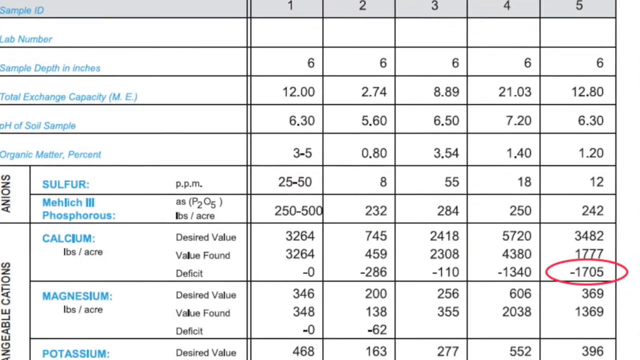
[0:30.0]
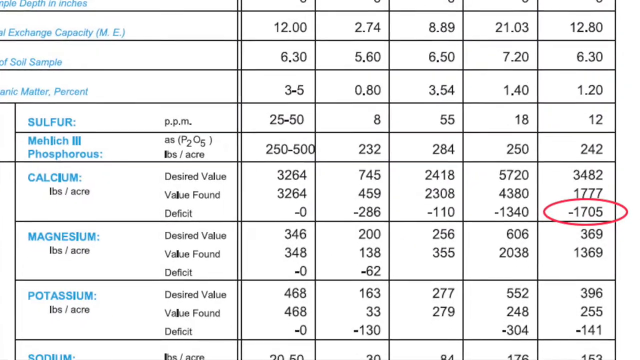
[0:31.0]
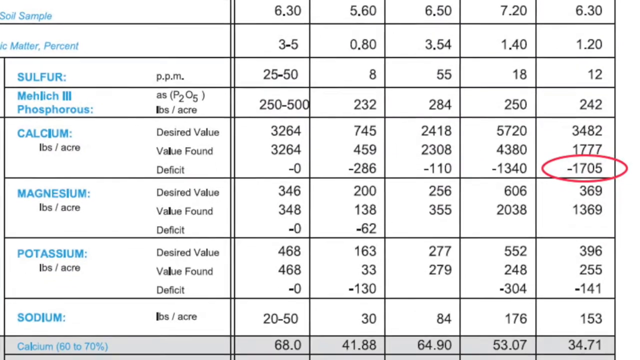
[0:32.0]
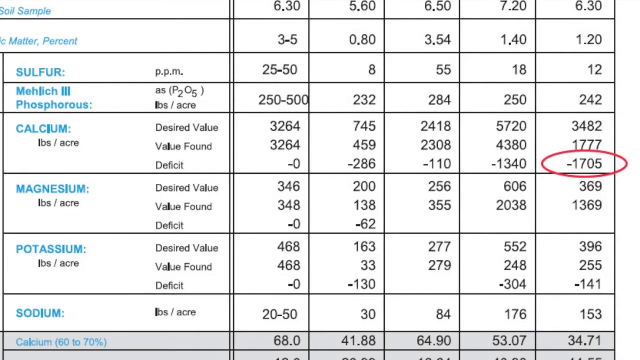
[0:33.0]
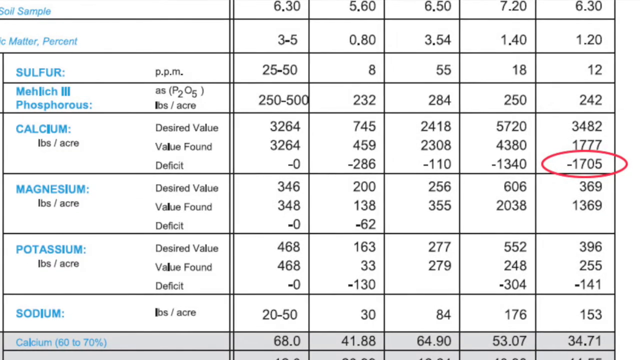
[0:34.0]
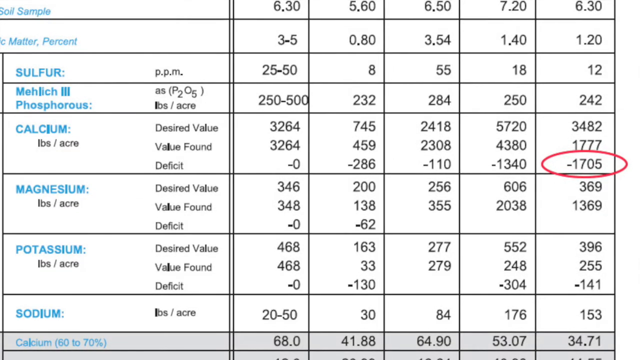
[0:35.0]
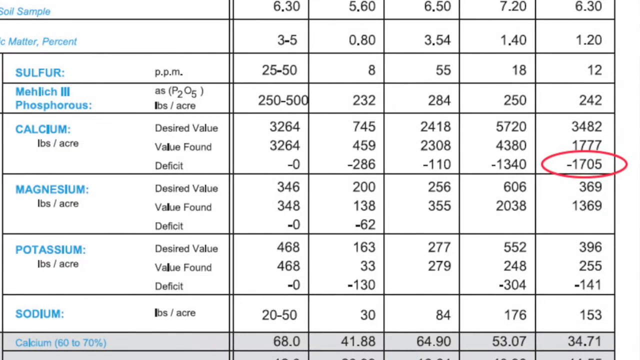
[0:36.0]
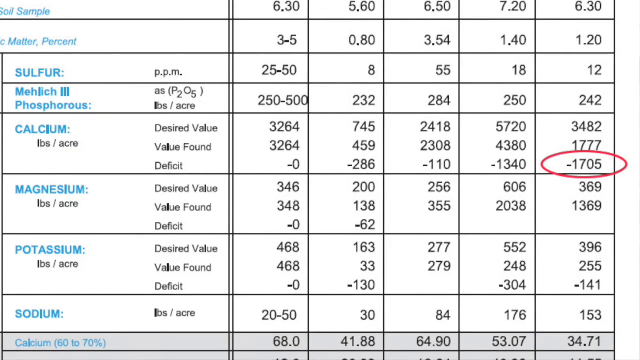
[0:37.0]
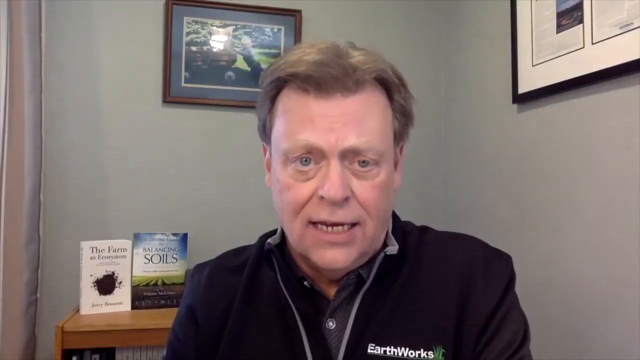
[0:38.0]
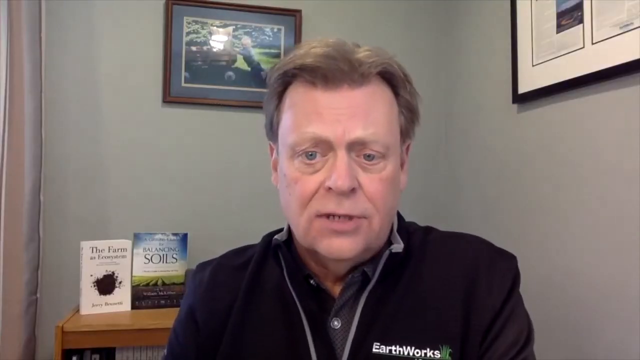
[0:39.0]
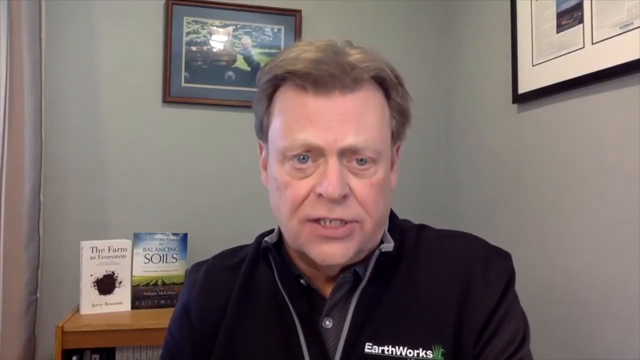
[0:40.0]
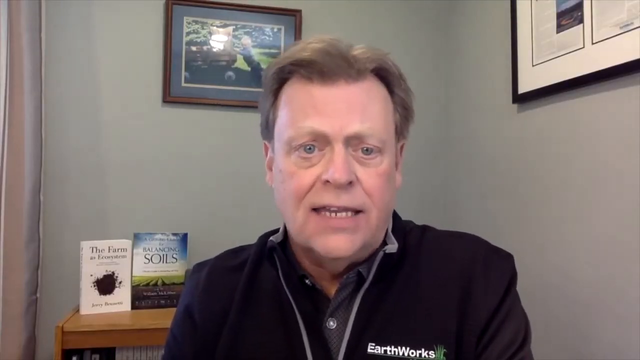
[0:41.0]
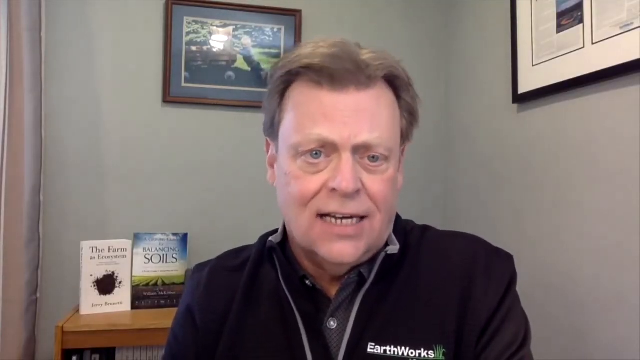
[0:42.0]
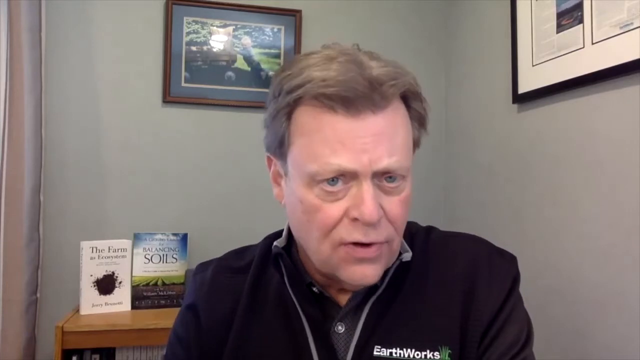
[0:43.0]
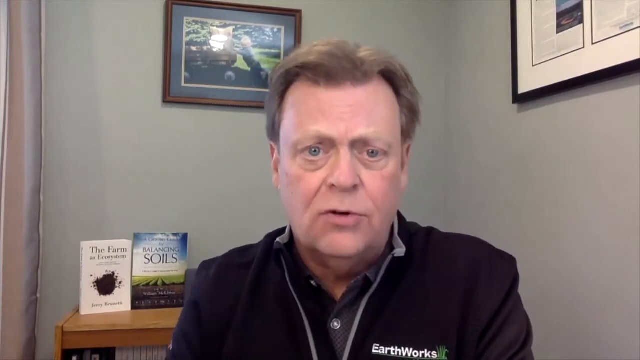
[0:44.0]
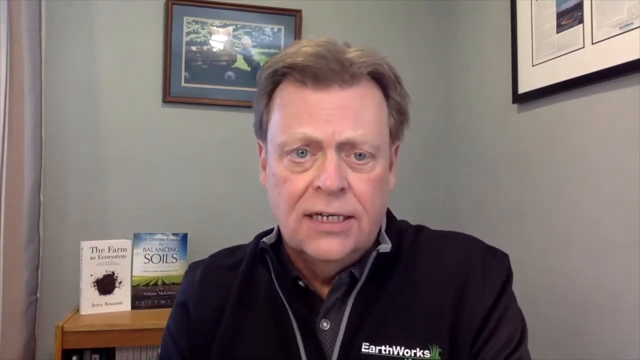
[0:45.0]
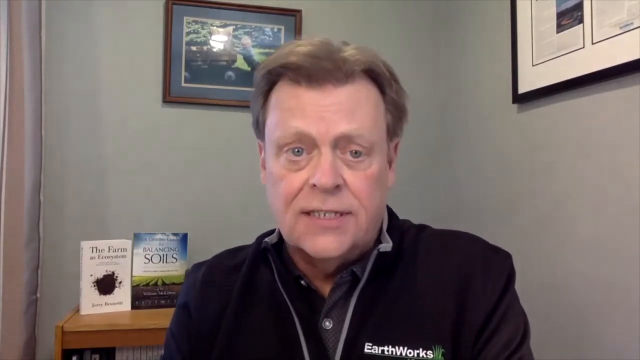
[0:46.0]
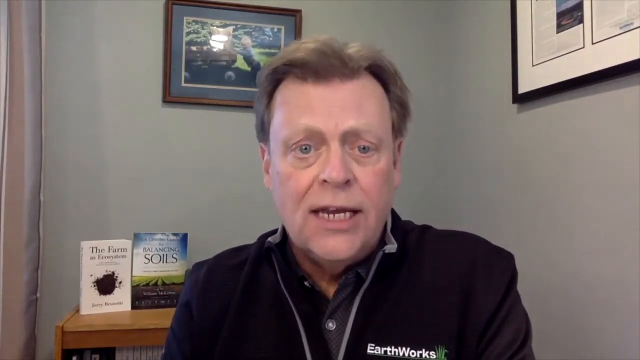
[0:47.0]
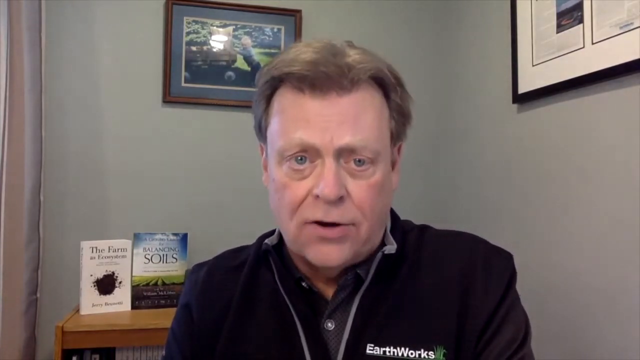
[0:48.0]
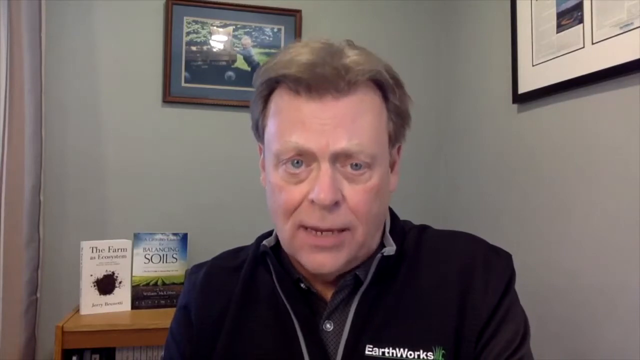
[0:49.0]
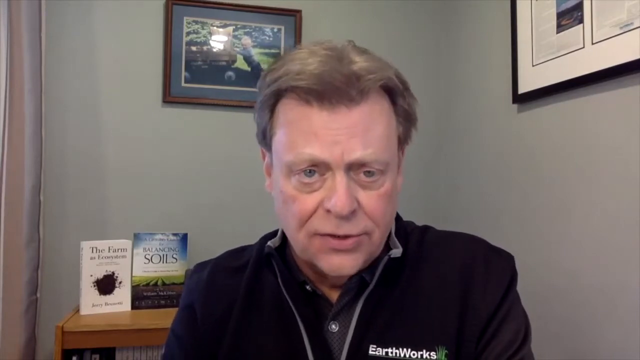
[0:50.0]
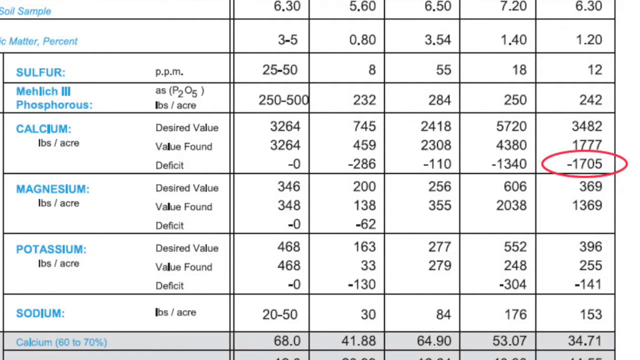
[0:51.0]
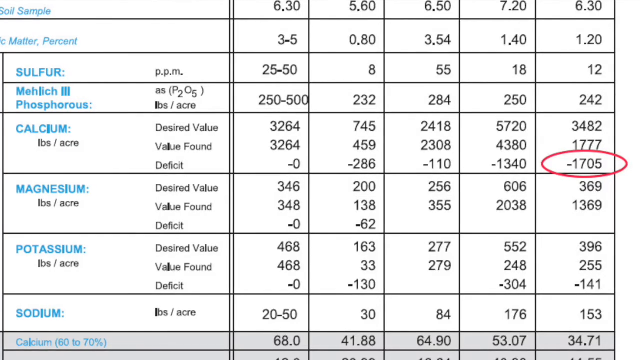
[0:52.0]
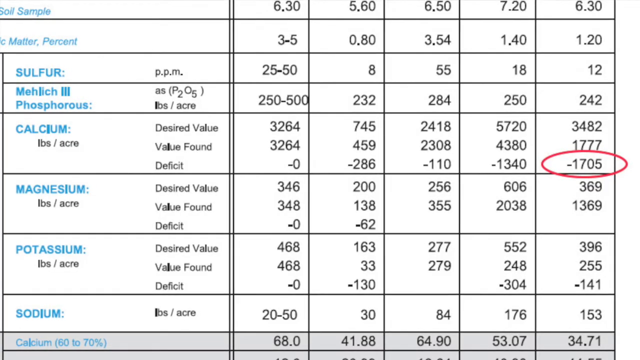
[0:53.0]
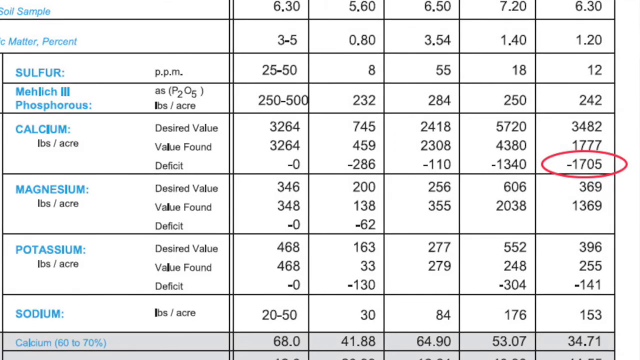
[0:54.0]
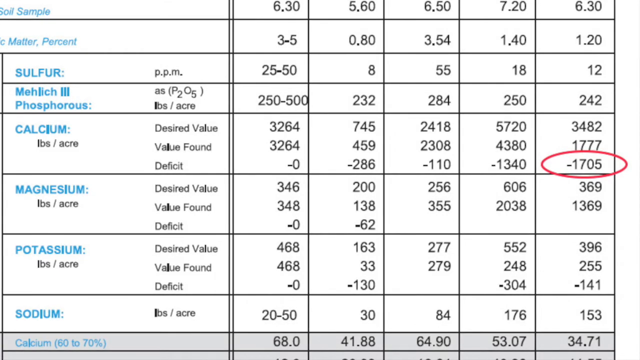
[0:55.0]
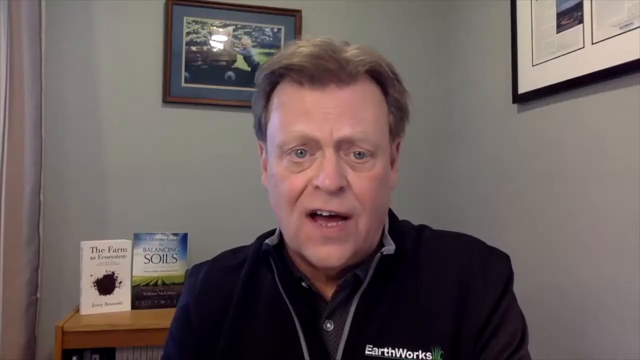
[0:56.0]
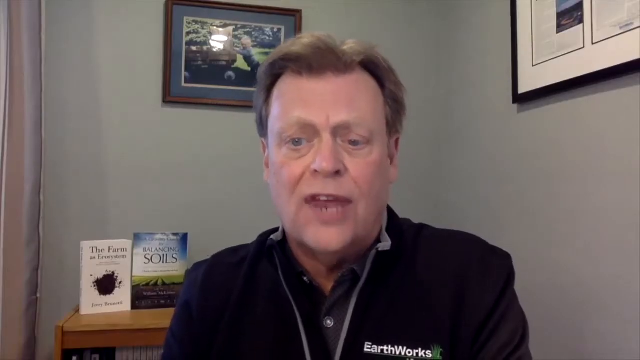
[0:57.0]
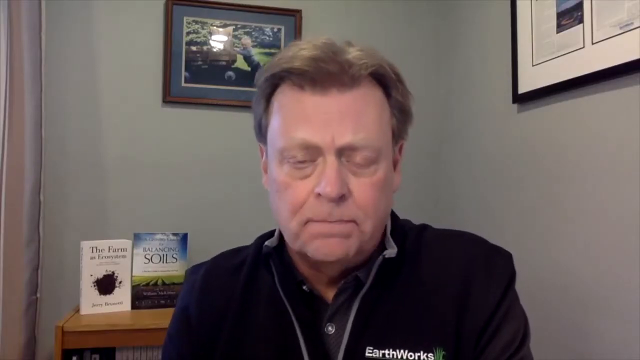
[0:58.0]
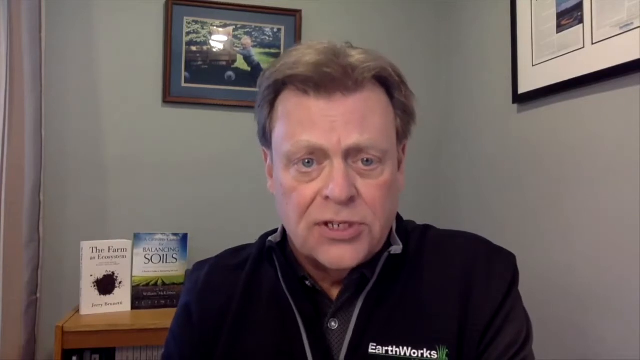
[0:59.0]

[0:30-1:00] The Logan Labs soil report is on screen, with the calcium number, the deficit, circled in red ink; it reads negative 1,705. The video returns to Joel Simmons in his office, who speaks to the camera, looking at it very intently. It goes back to the soil report, where the calcium figure is circled, and then back to Joel in the office. The soil report shows many other numbers and results, but the focus appears to be on the calcium number.